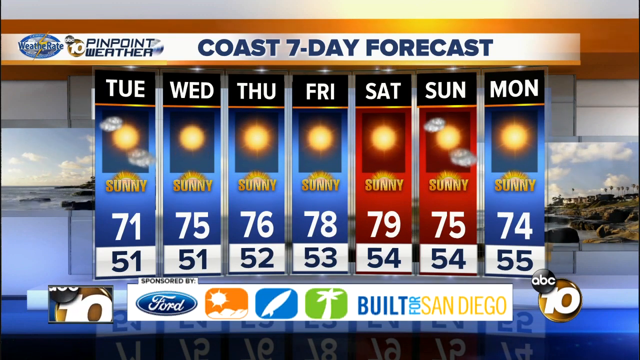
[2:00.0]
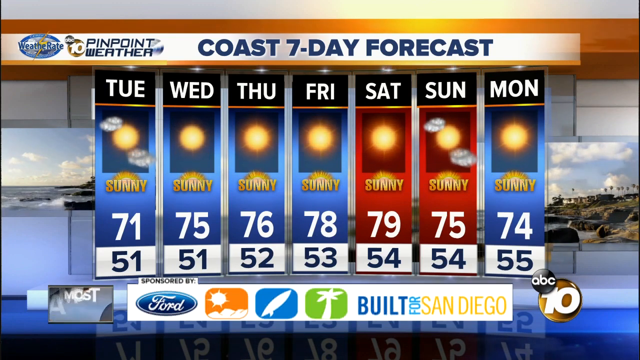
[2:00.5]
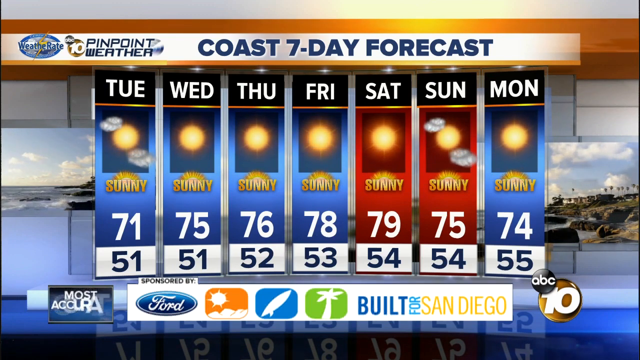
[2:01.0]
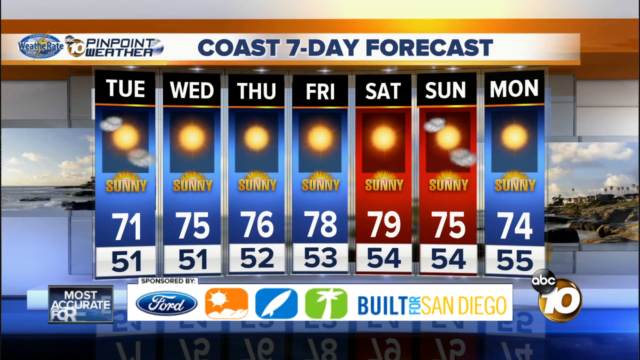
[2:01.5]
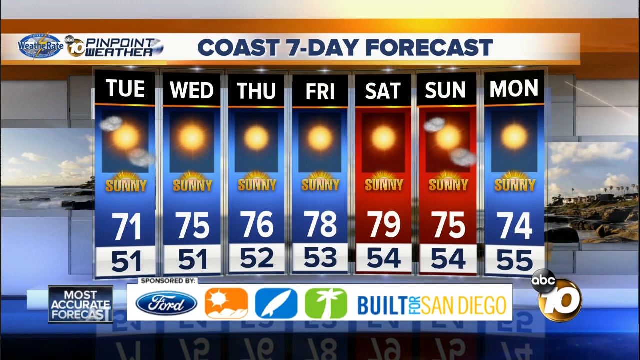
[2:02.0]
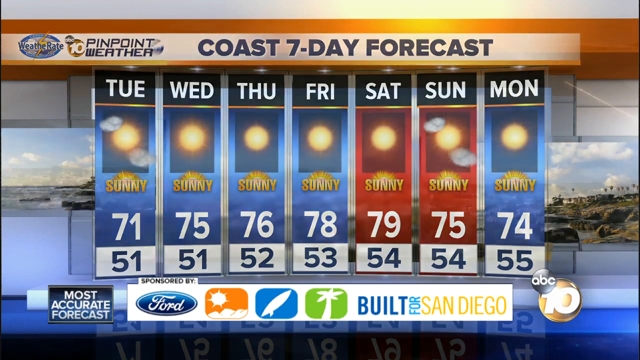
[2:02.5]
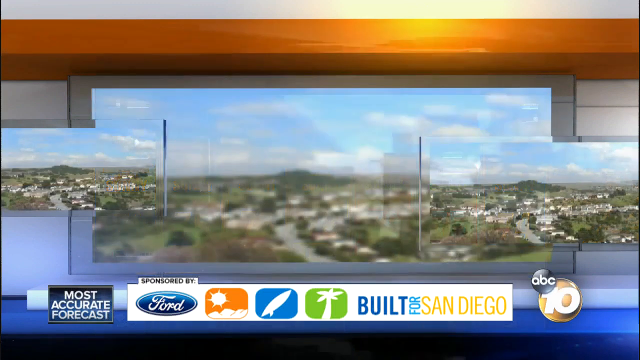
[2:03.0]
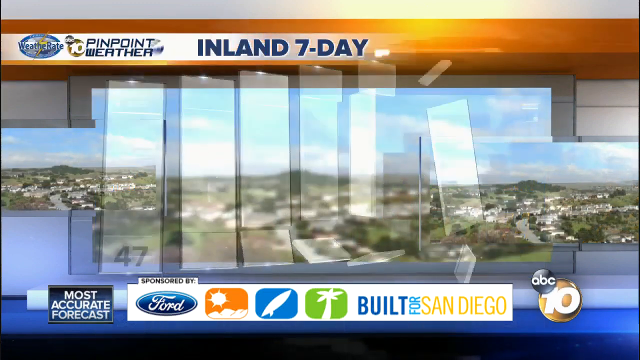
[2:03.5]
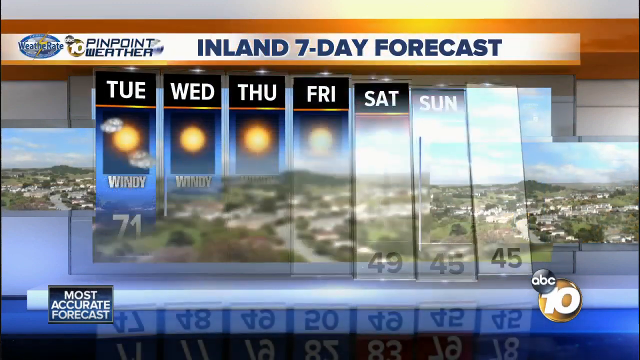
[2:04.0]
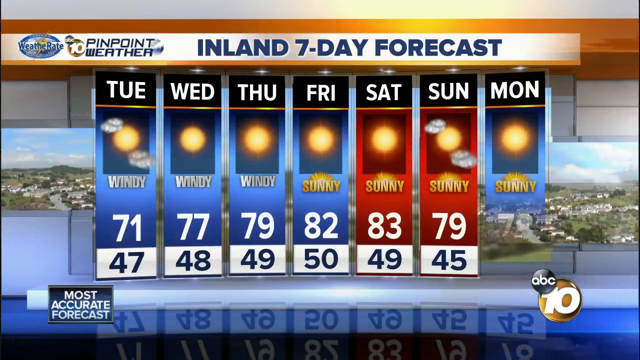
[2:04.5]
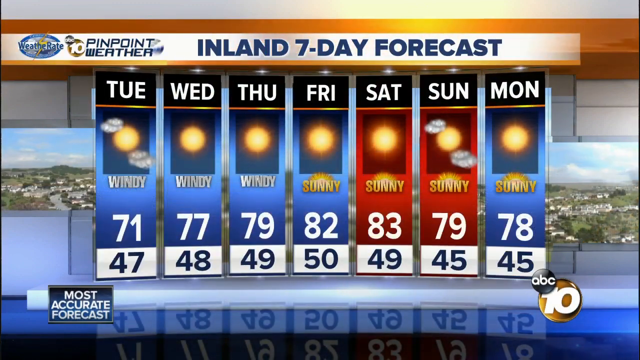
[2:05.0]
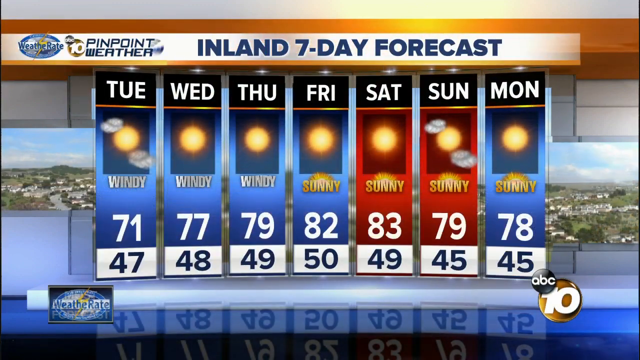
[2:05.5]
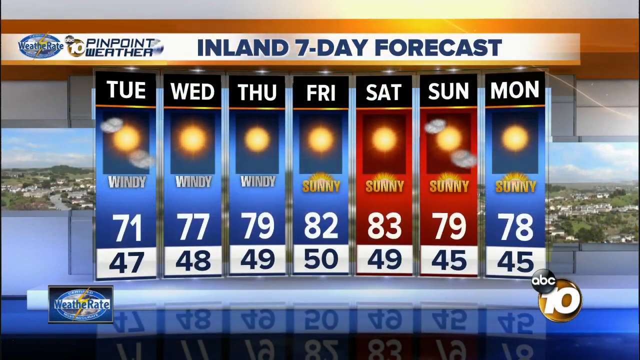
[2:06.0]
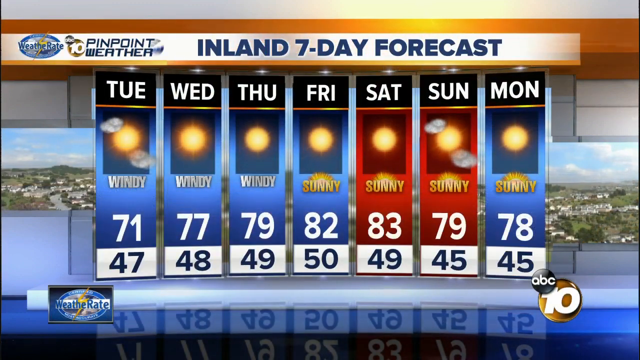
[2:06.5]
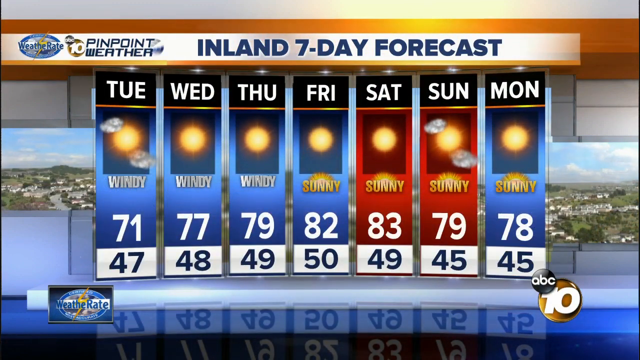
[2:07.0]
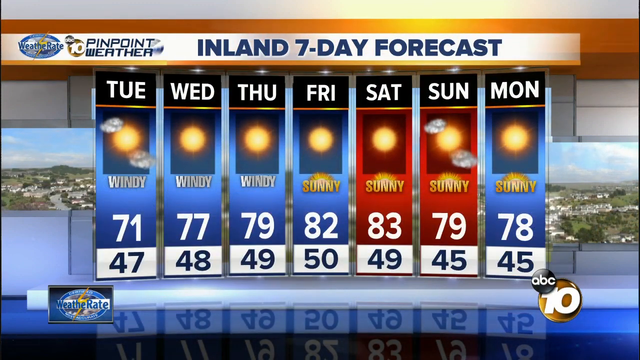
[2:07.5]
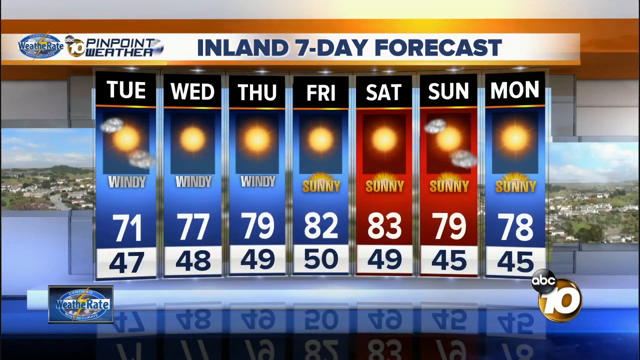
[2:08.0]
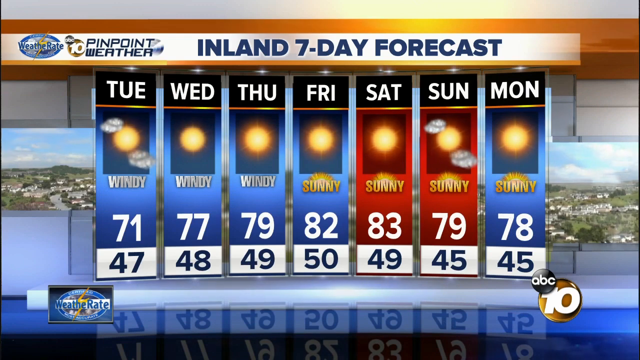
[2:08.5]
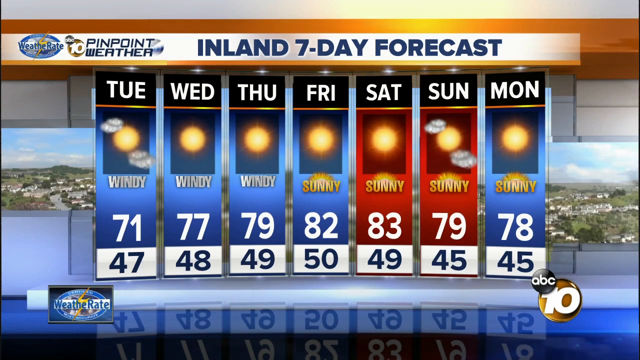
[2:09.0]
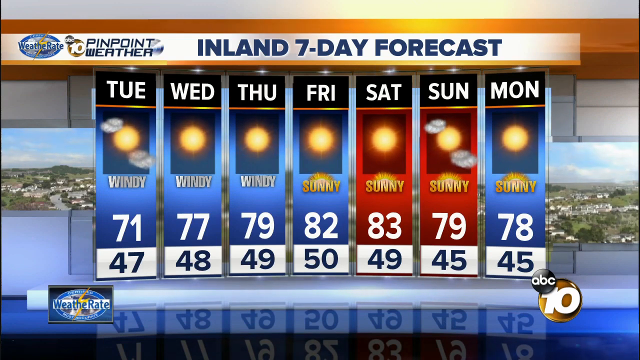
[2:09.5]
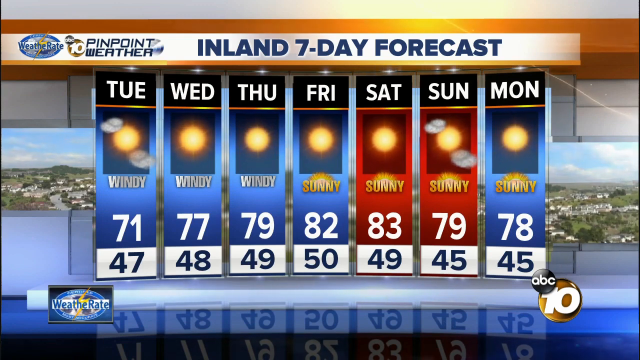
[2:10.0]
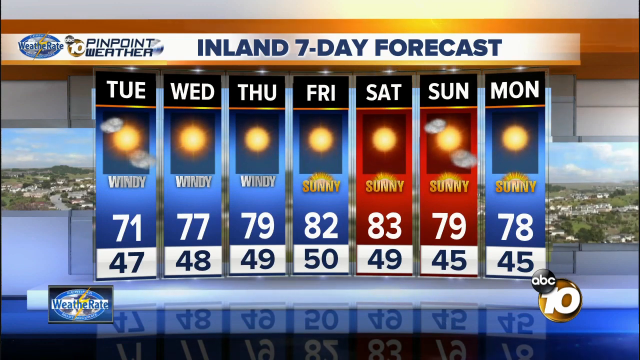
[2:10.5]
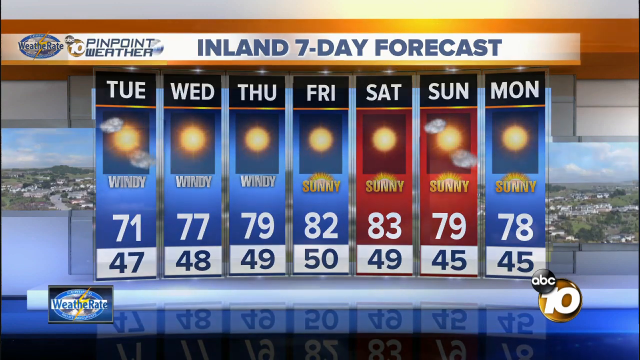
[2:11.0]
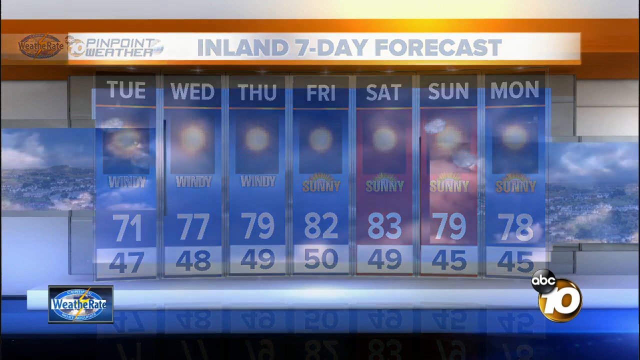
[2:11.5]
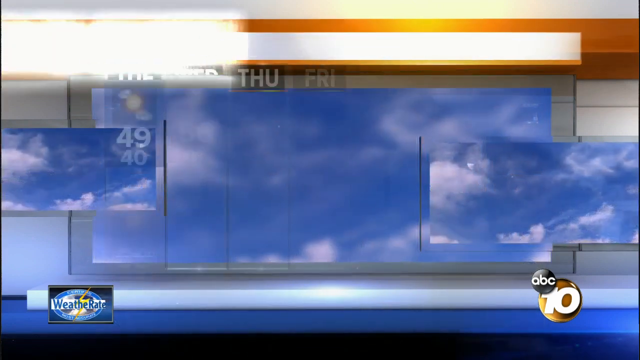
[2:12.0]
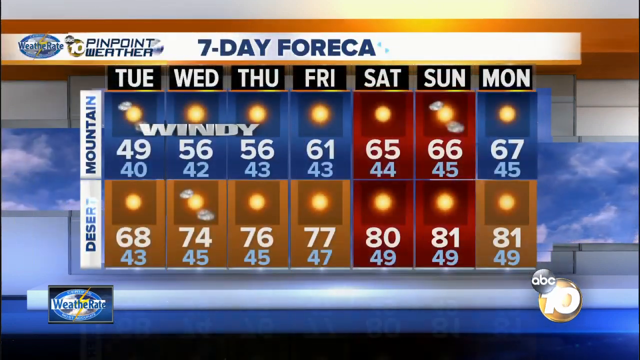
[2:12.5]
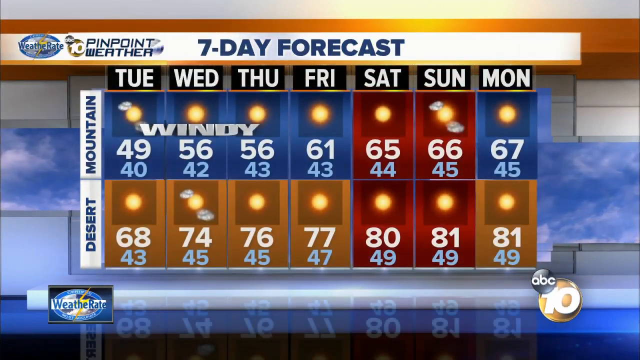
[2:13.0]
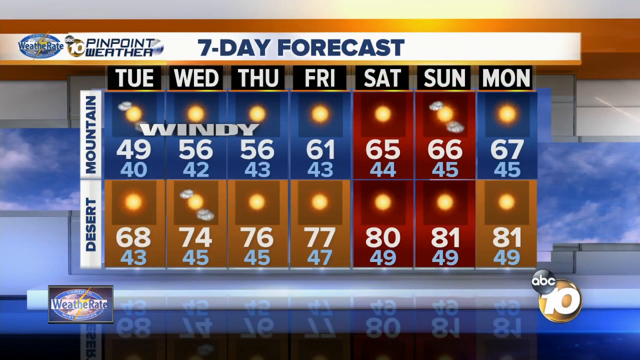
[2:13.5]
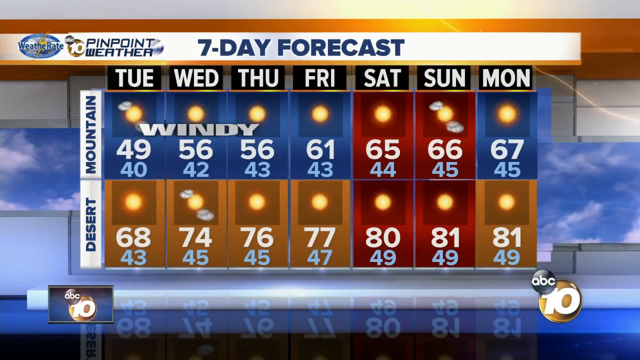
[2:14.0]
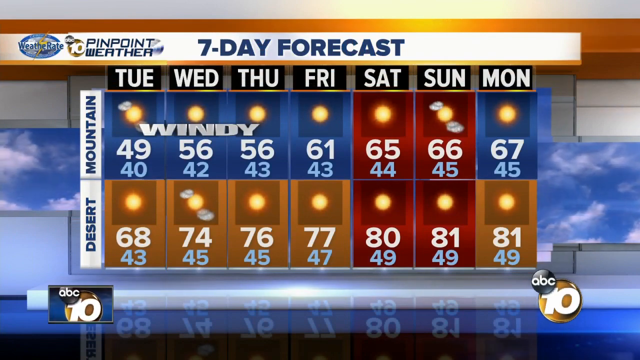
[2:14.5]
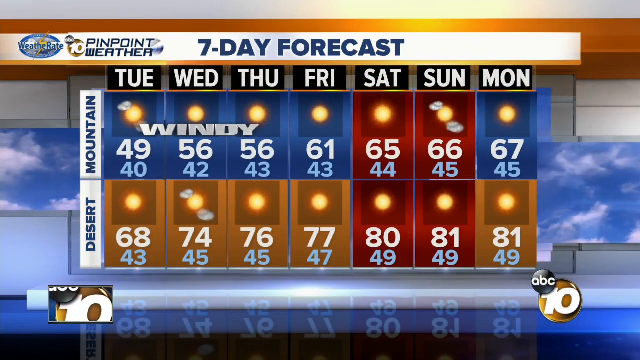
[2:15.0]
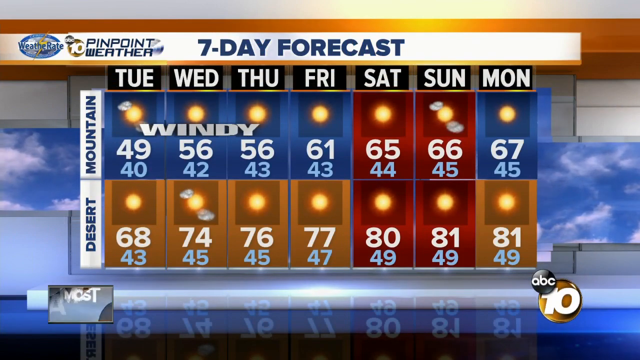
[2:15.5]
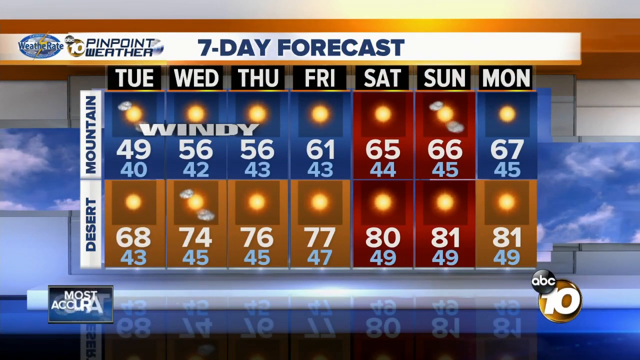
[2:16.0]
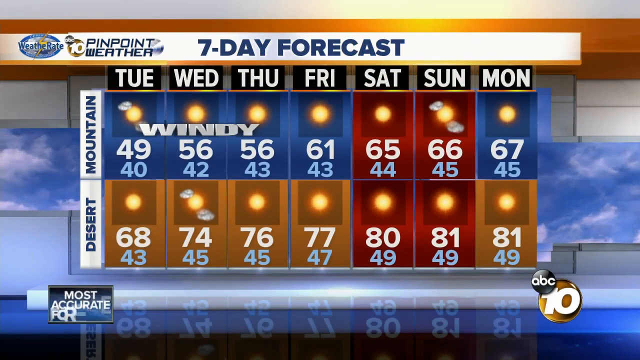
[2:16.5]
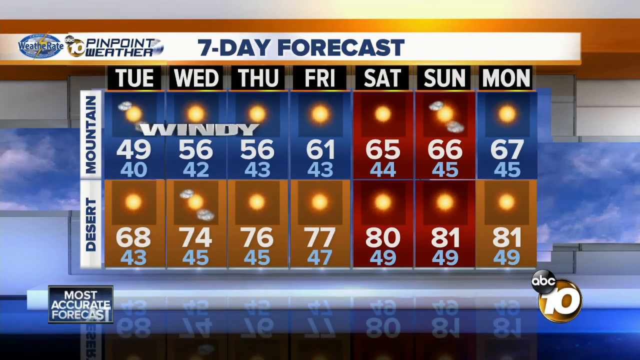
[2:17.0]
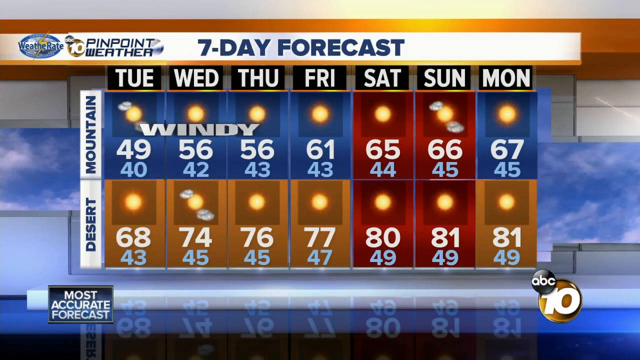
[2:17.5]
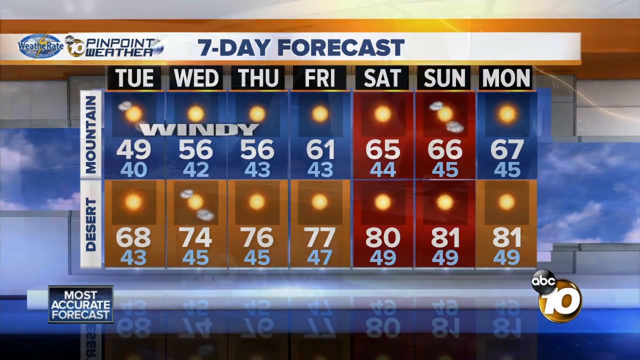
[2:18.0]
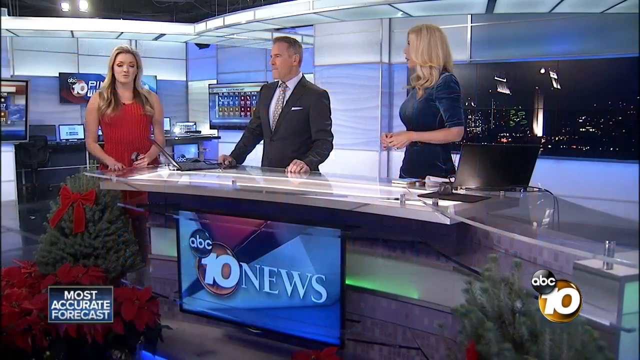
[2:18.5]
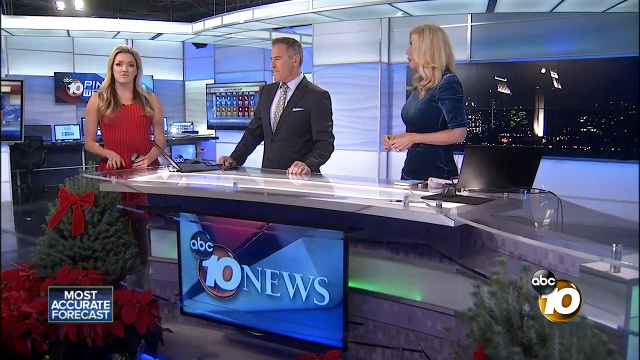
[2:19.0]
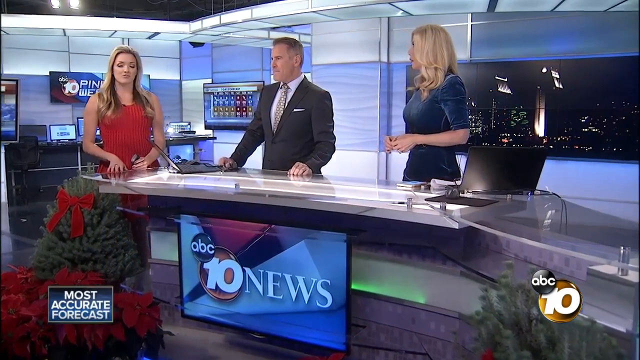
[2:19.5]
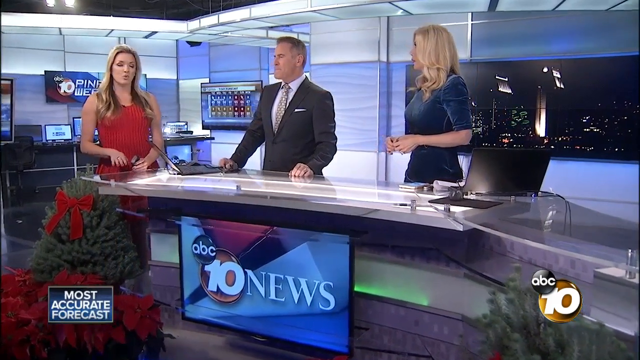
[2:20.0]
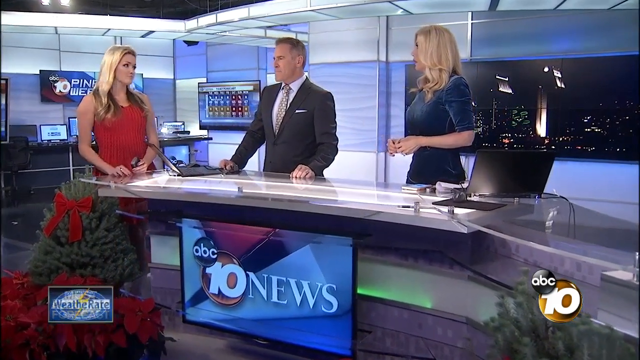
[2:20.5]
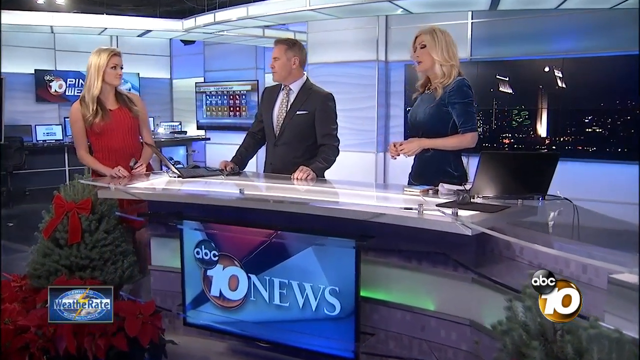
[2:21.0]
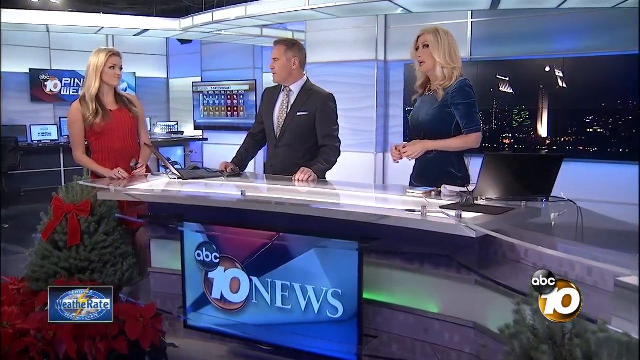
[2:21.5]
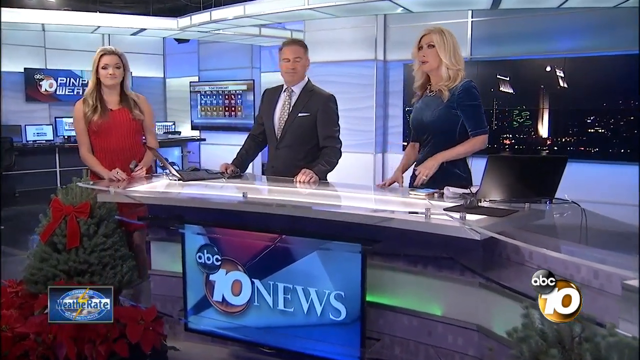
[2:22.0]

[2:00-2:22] The coast 7-day forecast is still shown, sunny for the whole week. An inland 7-day forecast follows, running from Tuesday to Monday, with a highest temperature of 83 and mostly sunny, a lowest of 45, sunny but windy, and the first three days marked windy and sunny. The video returns to the newsroom, where "ABC 10 news" is written, and a man and two women keep talking about the weather. In the corner are TV monitors showing the weather. The ABC channel name is shown.